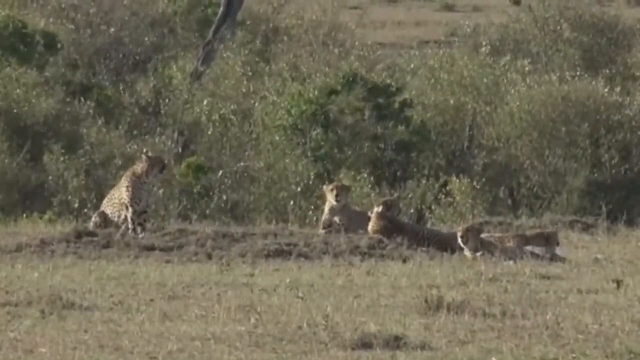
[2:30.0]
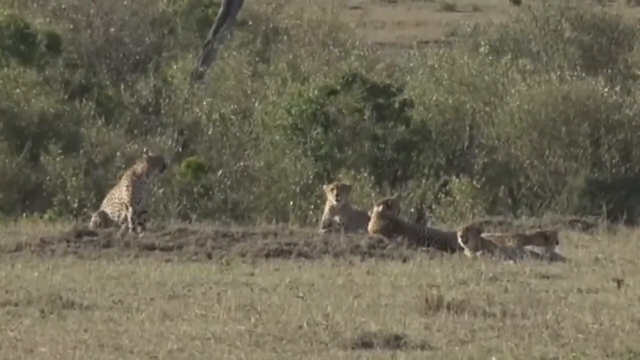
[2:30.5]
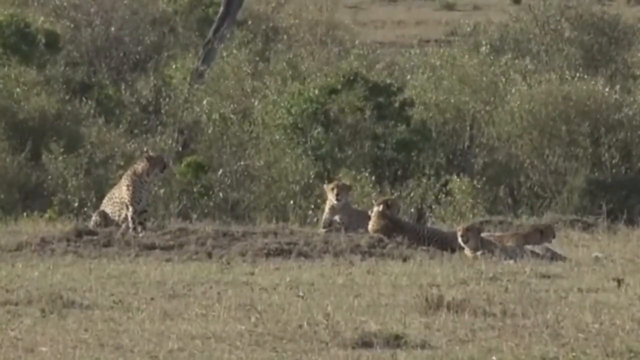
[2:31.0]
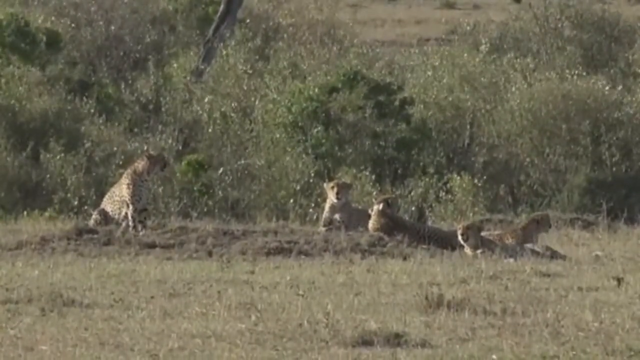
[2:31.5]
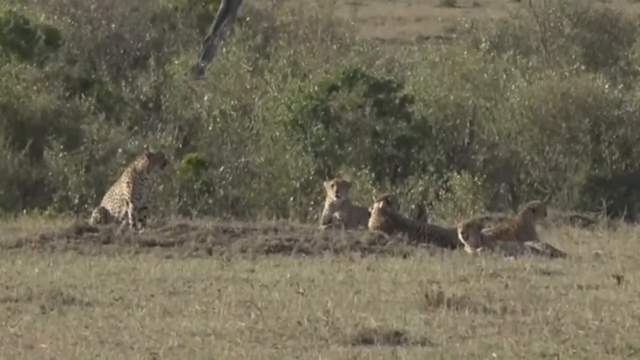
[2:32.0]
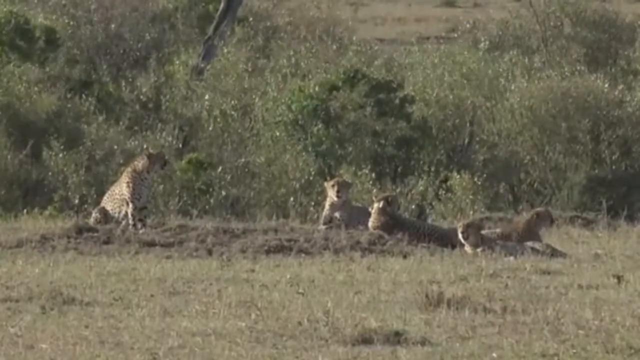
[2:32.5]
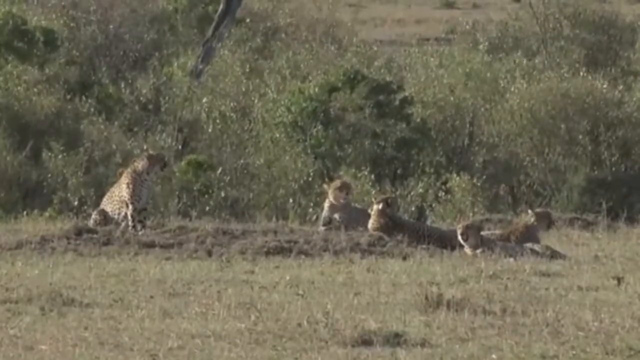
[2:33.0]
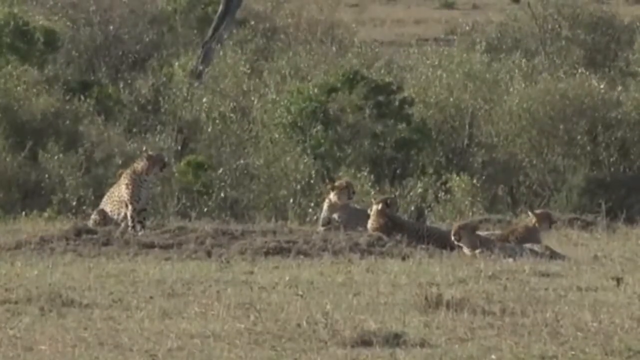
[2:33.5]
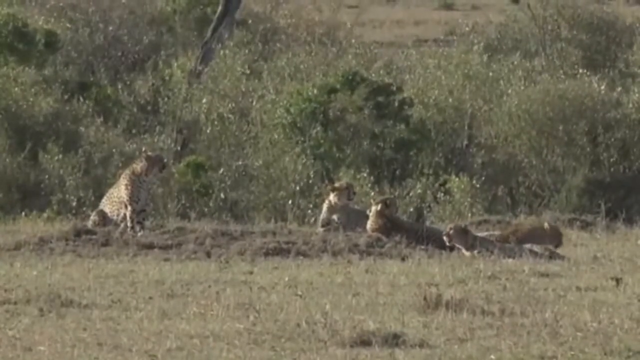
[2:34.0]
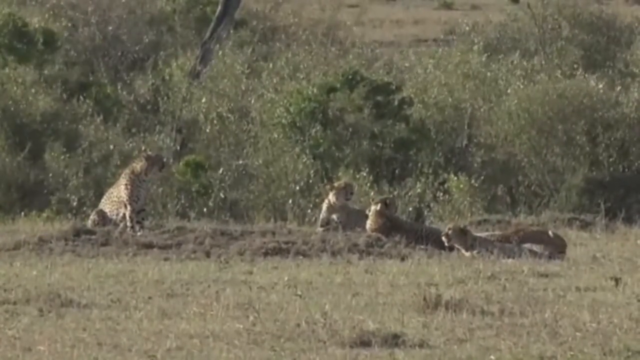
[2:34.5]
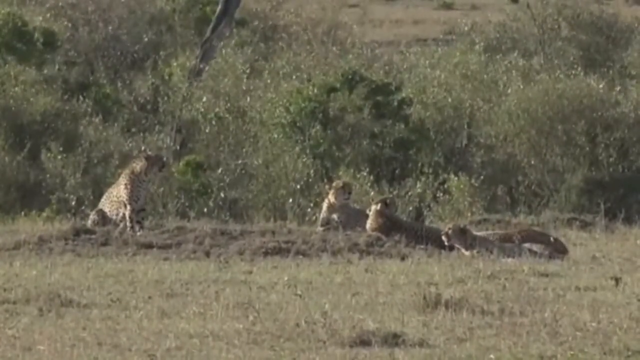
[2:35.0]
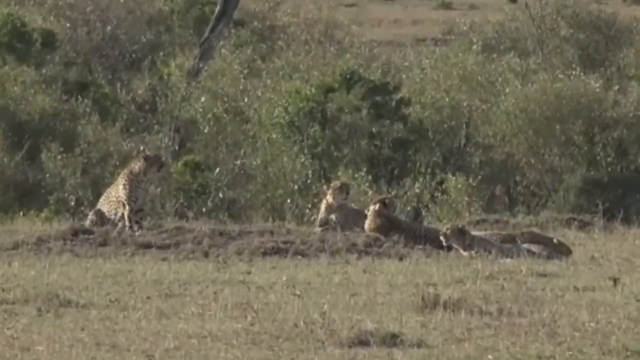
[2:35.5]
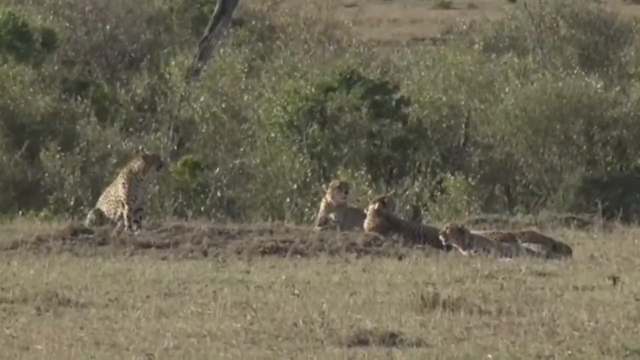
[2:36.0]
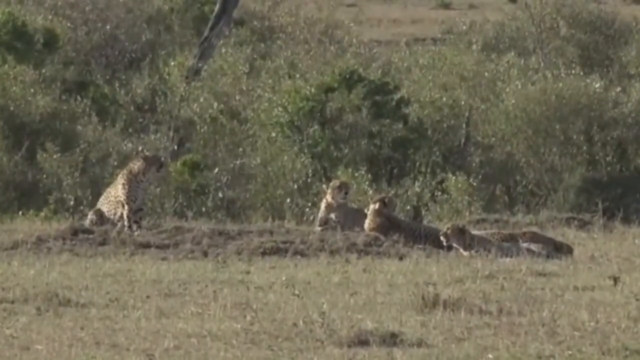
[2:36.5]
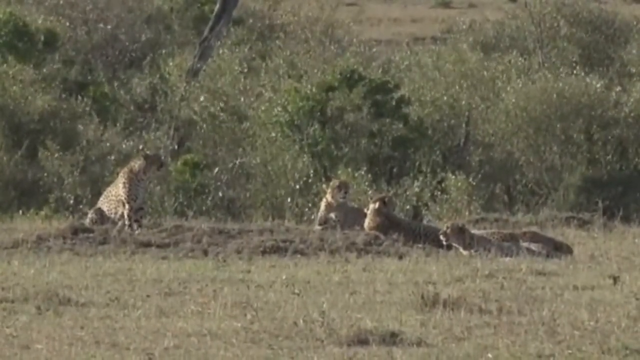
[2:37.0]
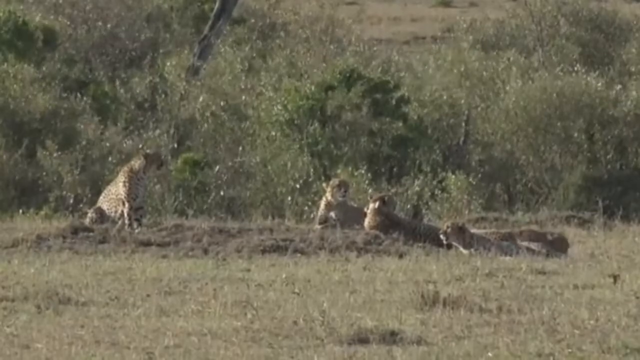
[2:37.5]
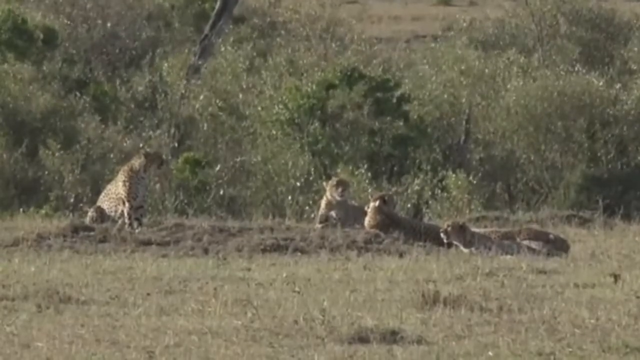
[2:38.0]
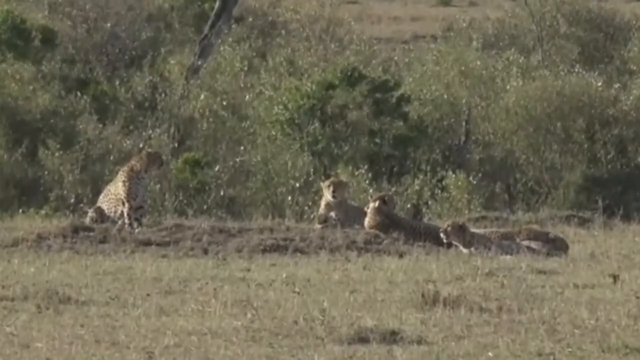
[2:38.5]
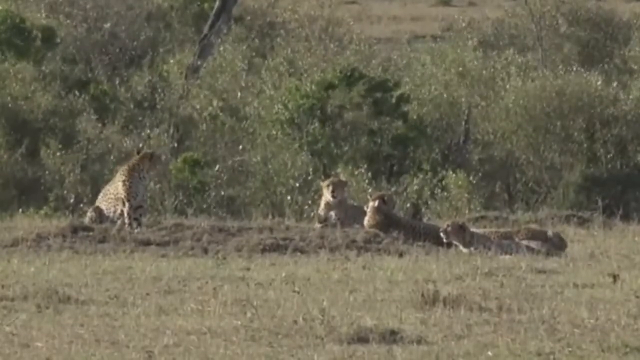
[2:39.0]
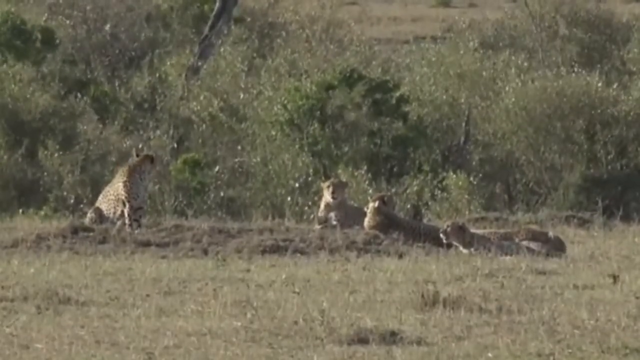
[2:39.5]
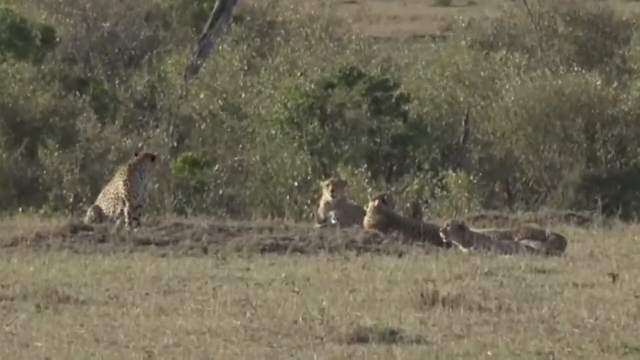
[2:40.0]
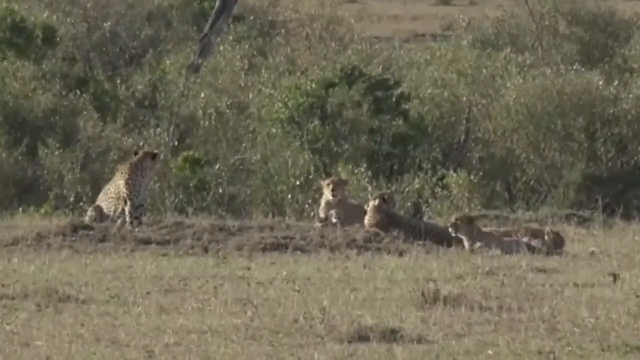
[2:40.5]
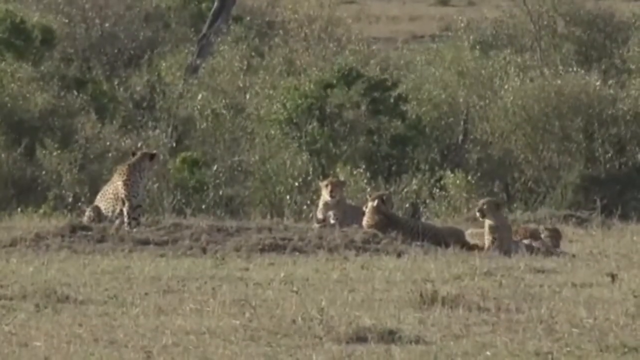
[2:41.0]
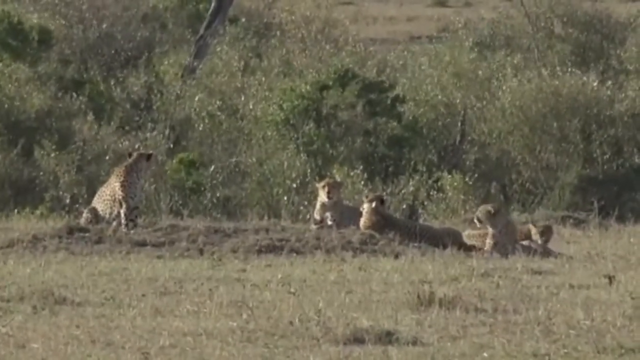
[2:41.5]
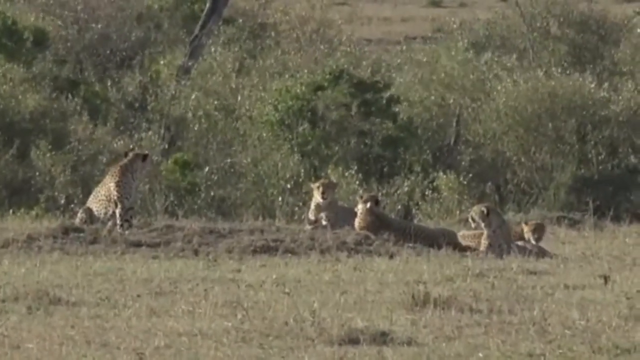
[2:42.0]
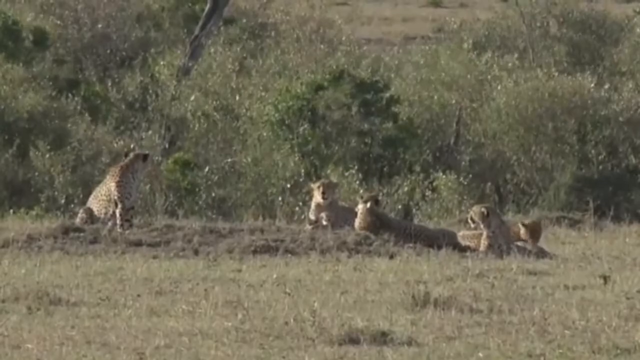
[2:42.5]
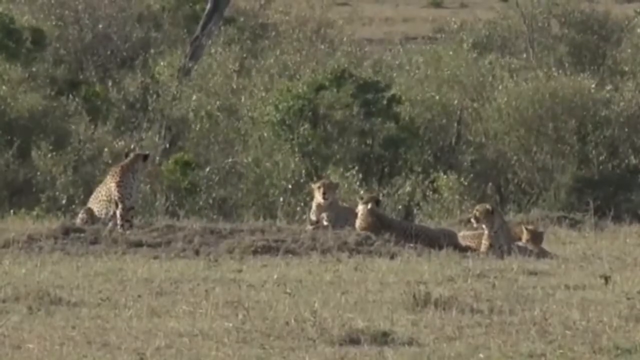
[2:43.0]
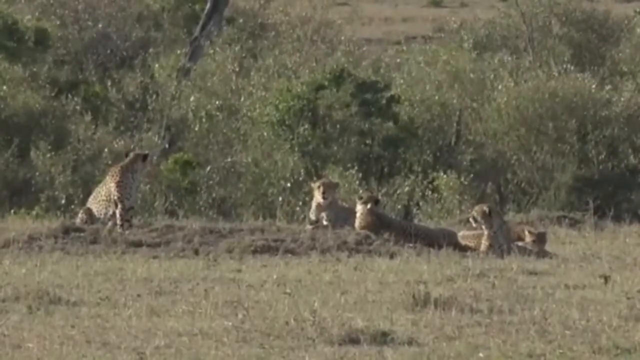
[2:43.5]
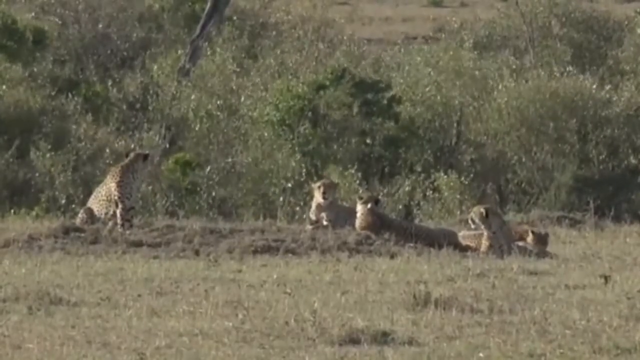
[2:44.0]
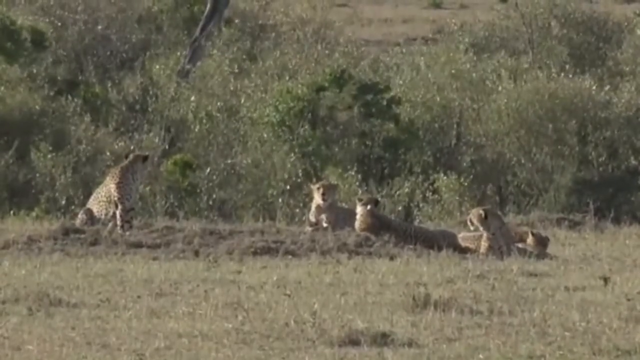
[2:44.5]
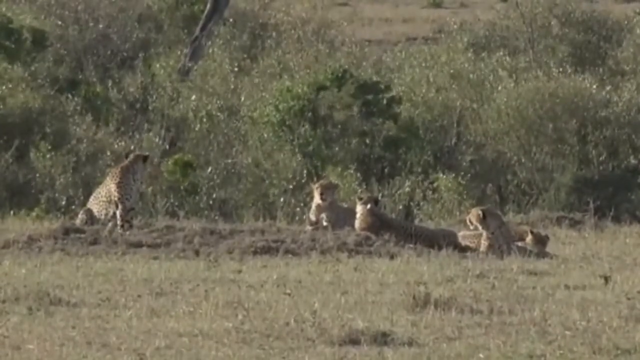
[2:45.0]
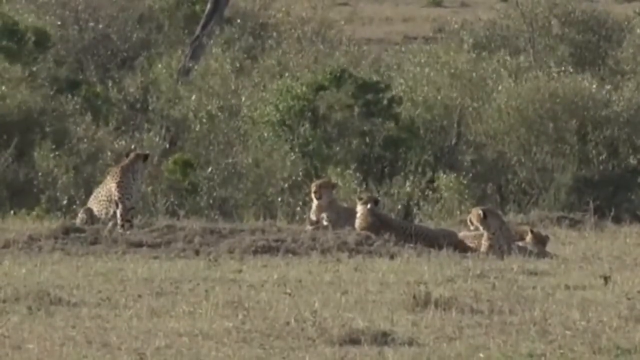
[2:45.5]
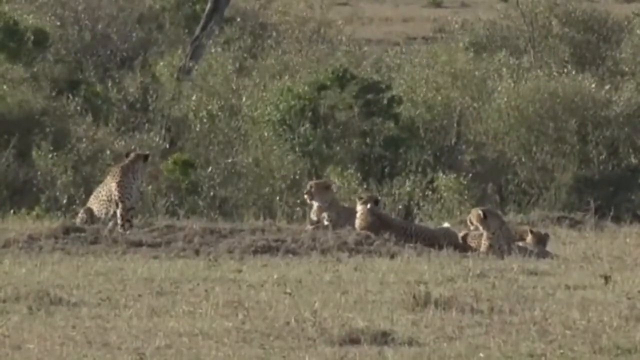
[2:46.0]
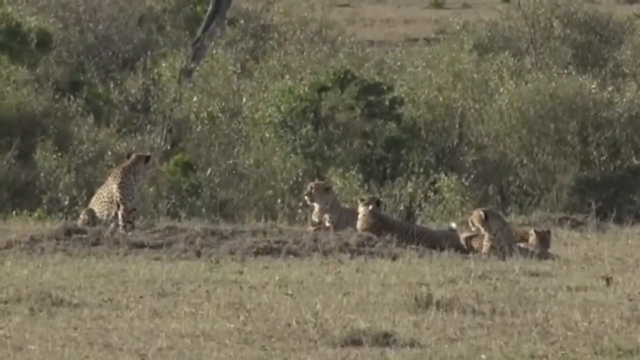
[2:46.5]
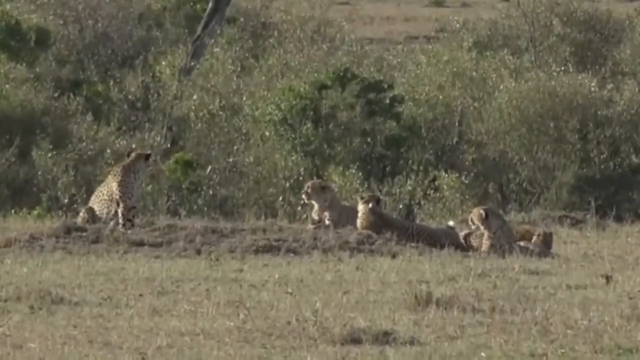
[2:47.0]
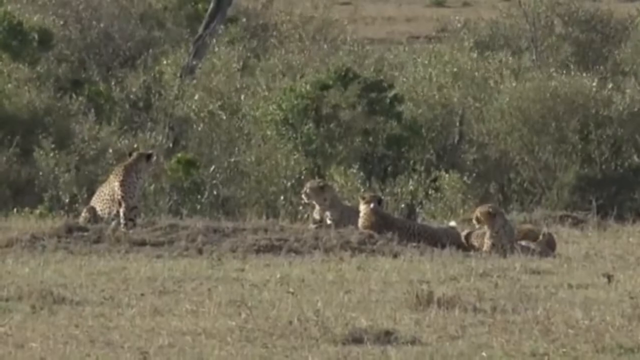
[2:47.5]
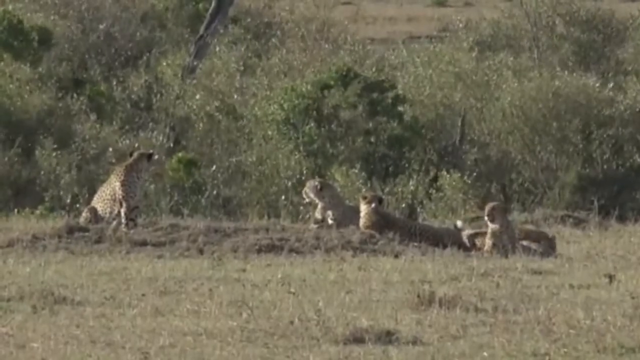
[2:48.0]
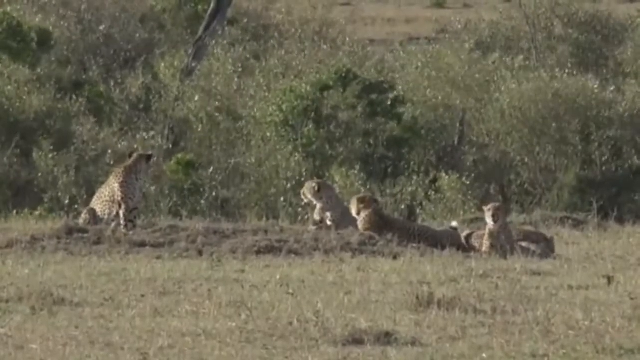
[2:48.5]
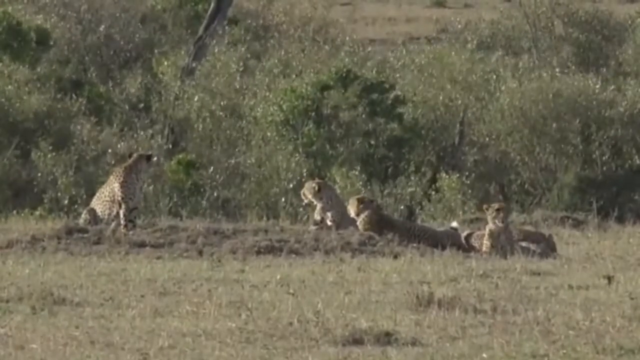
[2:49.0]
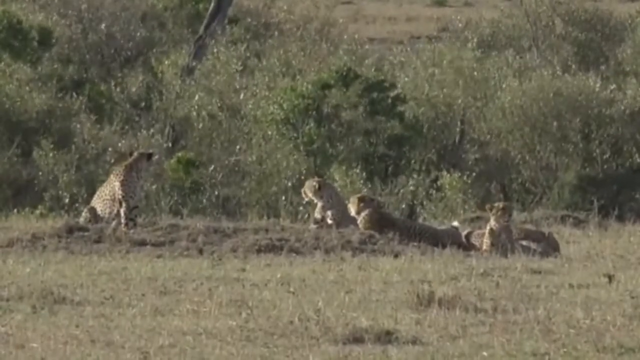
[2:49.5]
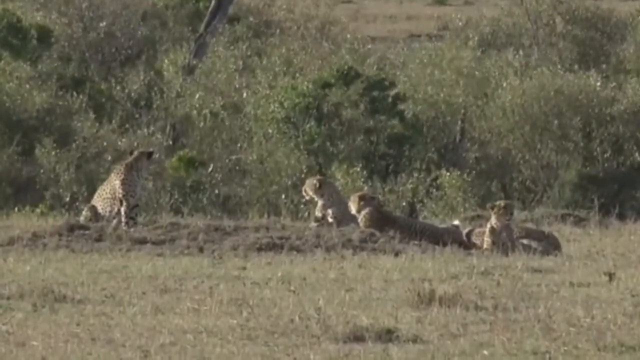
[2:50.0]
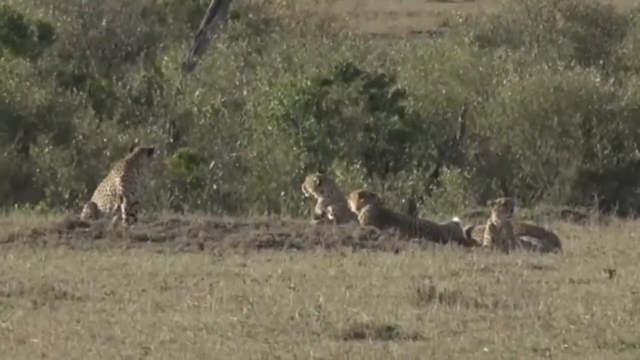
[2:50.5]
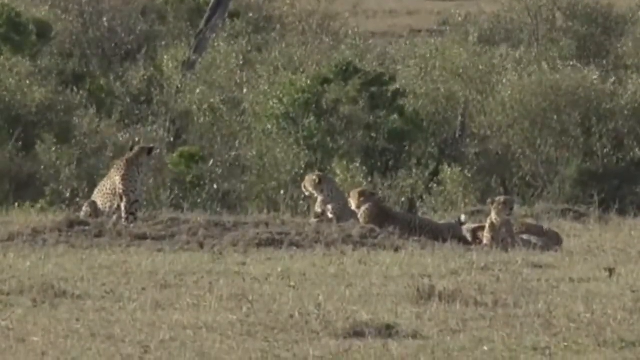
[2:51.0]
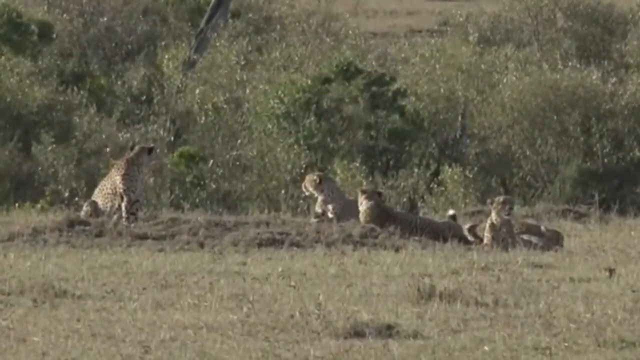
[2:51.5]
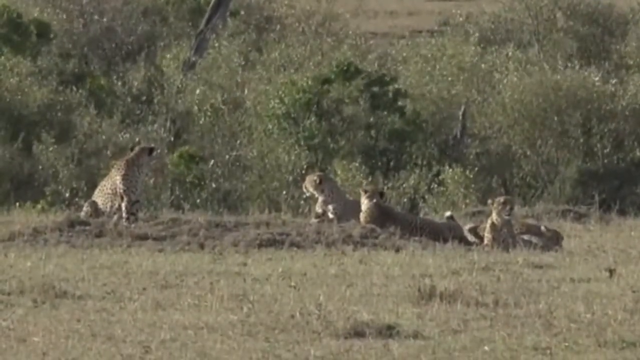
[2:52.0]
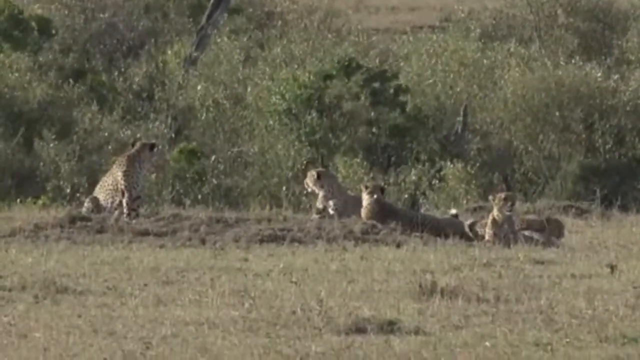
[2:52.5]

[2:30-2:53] What appears to be five cheetahs relax in their natural habitat on a warm, sunny day in a very dry, arid environment. Four of them on the right-hand side are lying down on the ground, while the one on the left-hand side is seated but not lying down. They are looking around them. Some small trees are behind them in the distance, and beyond that is a very desert-like environment. The ground where the cheetahs are is either soil or small grass, mostly brown in appearance. Occasionally the cheetahs lift their heads up and look around or slightly raise their positions, but mostly they just relax in the sun.